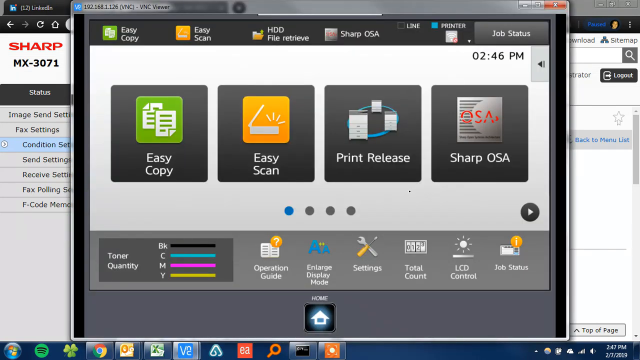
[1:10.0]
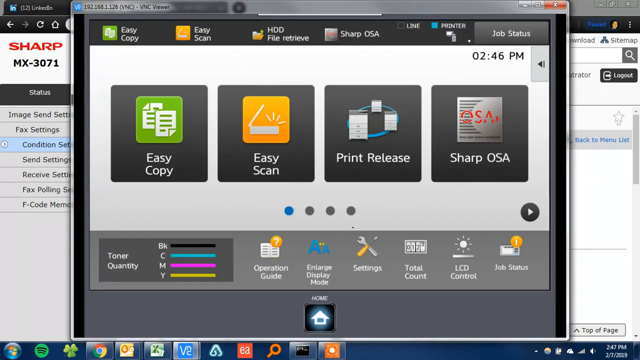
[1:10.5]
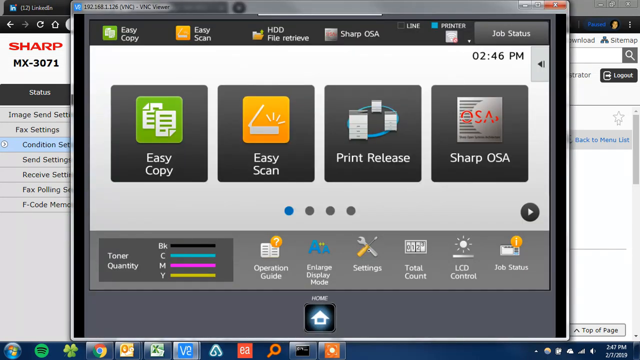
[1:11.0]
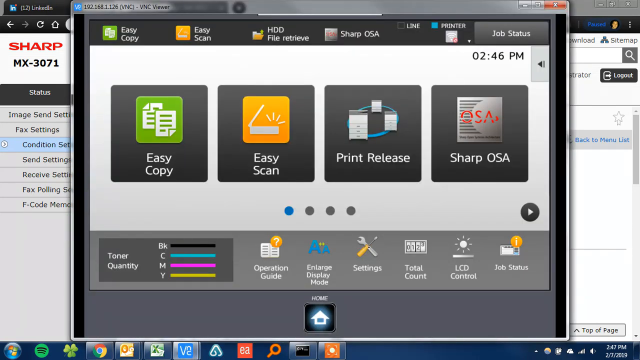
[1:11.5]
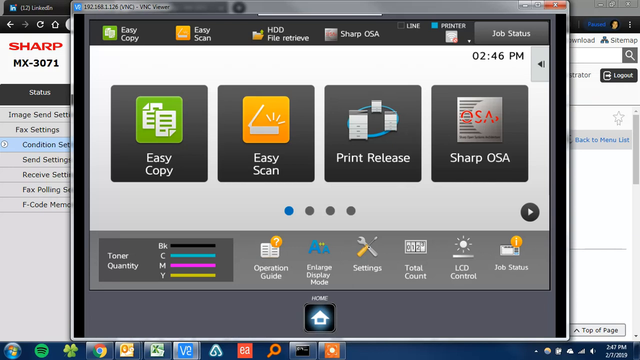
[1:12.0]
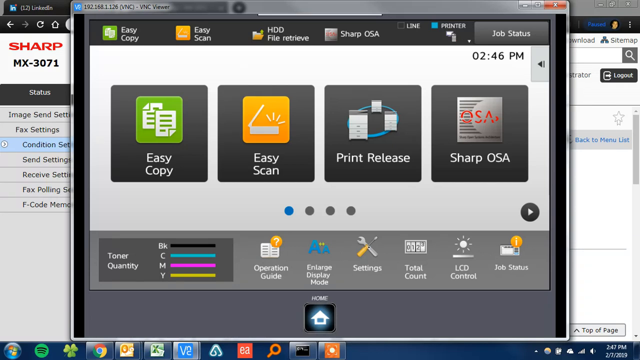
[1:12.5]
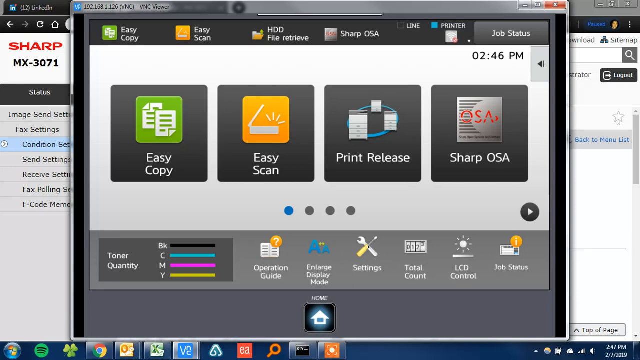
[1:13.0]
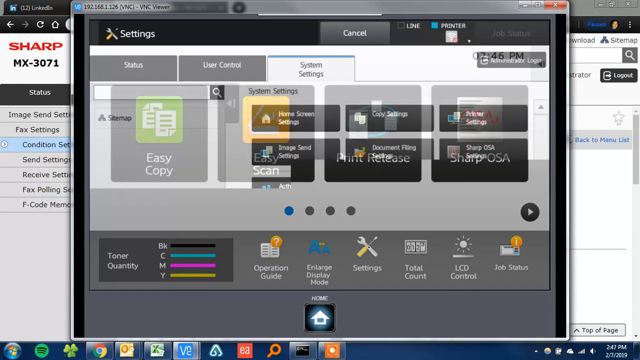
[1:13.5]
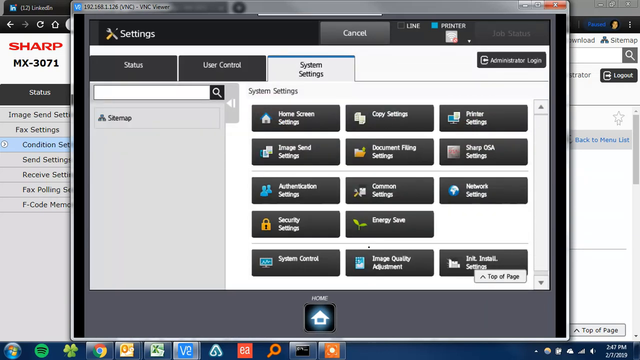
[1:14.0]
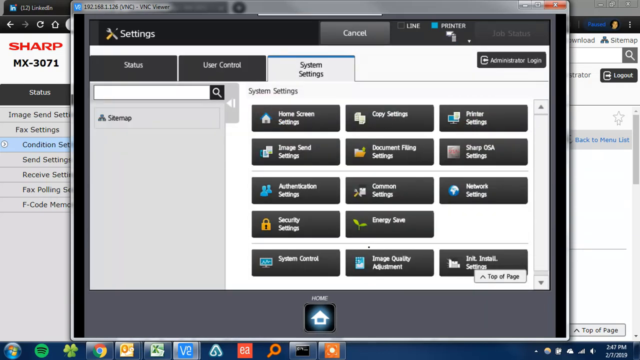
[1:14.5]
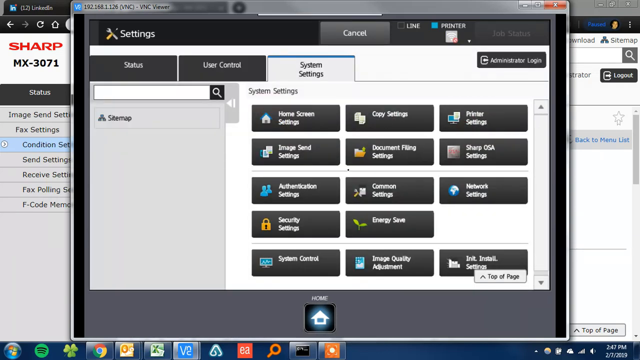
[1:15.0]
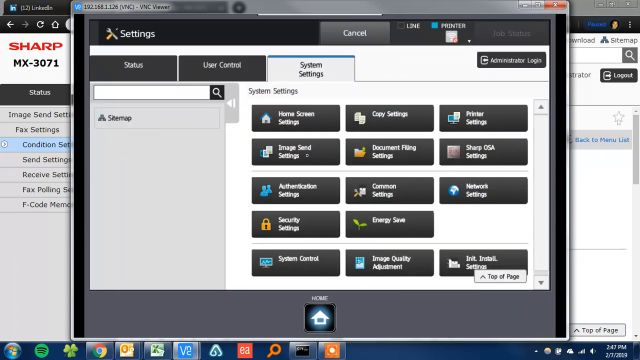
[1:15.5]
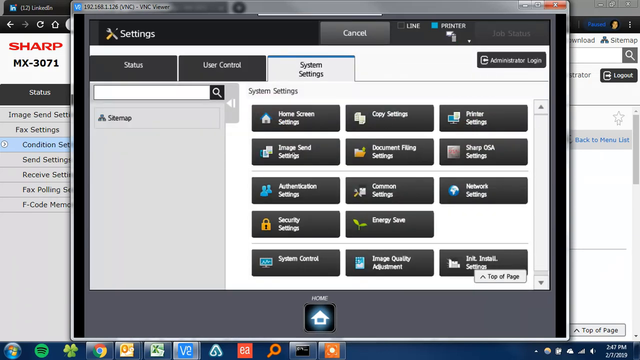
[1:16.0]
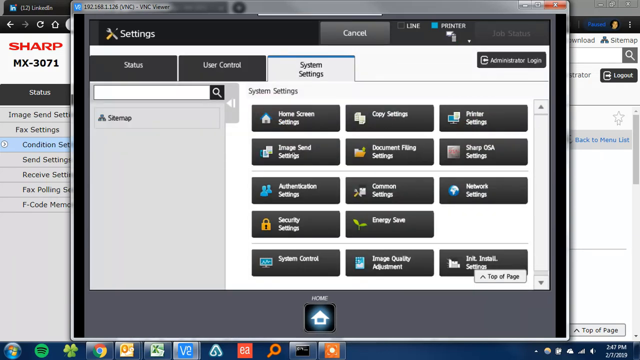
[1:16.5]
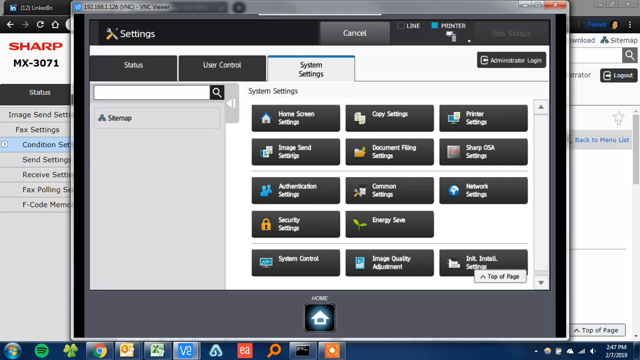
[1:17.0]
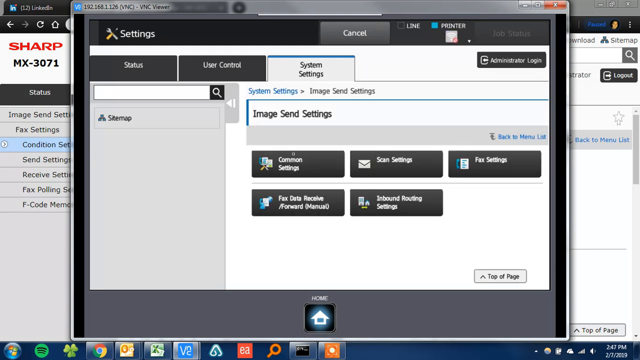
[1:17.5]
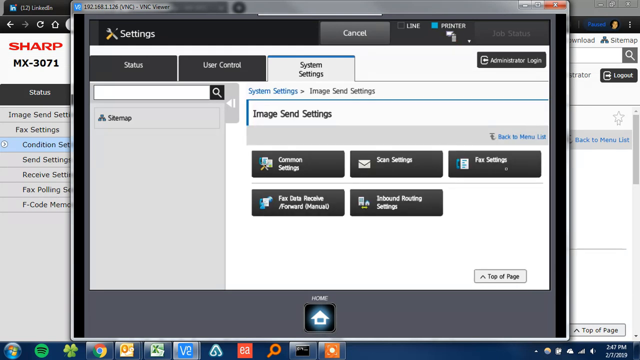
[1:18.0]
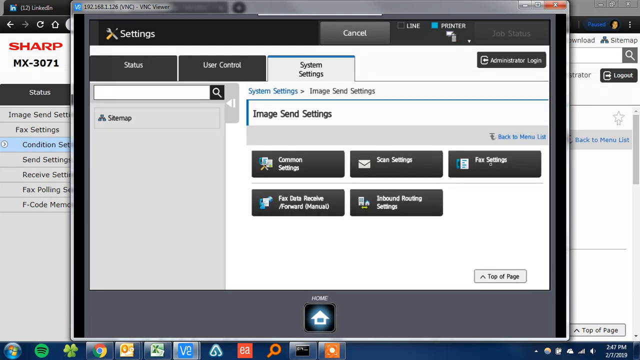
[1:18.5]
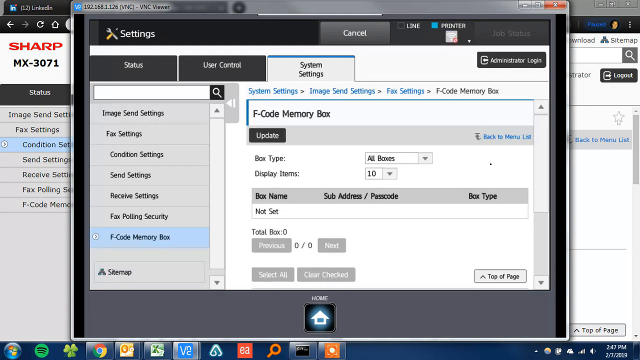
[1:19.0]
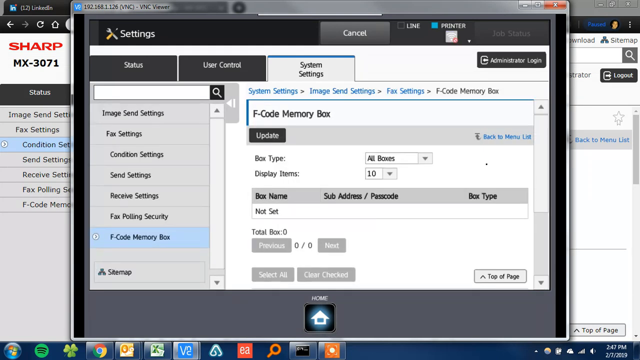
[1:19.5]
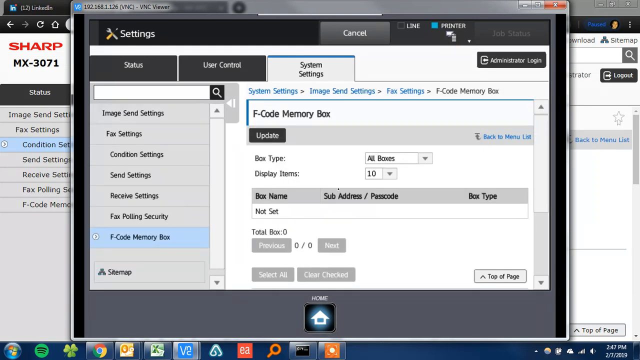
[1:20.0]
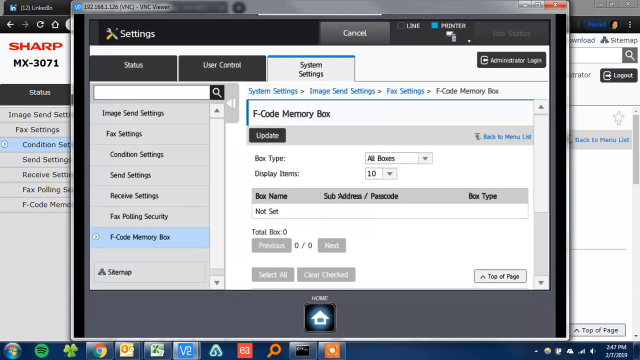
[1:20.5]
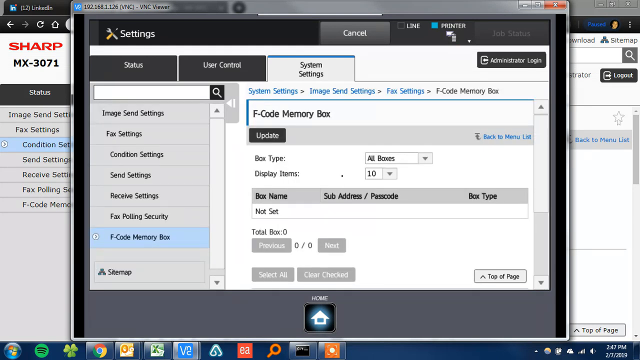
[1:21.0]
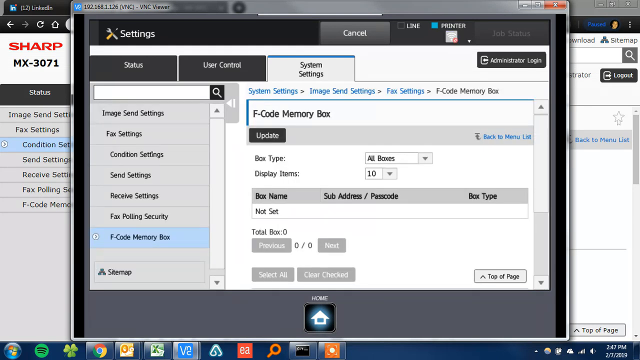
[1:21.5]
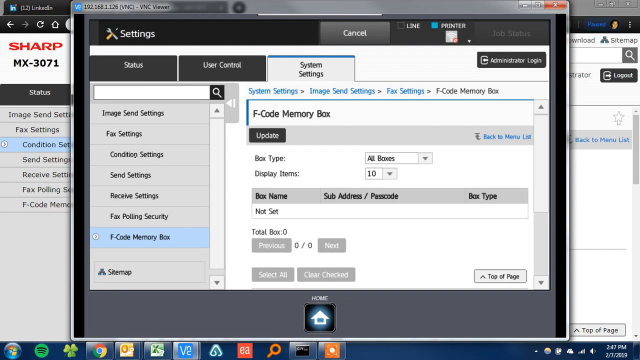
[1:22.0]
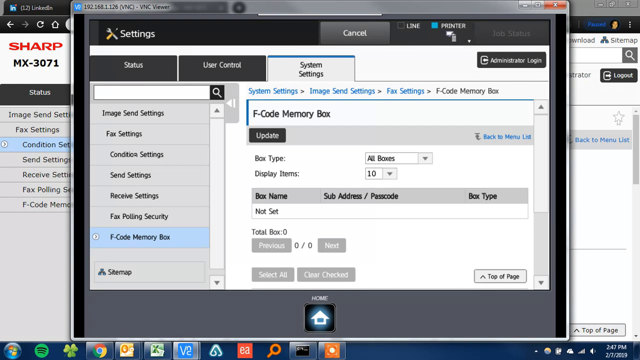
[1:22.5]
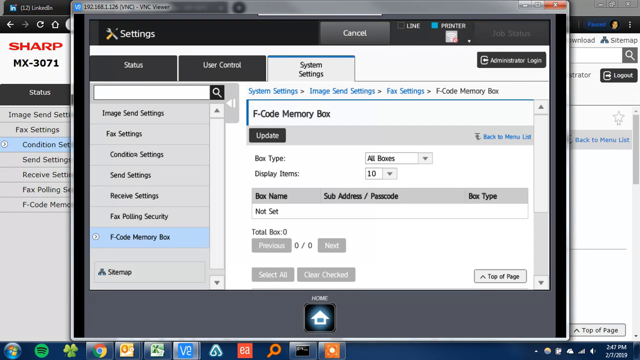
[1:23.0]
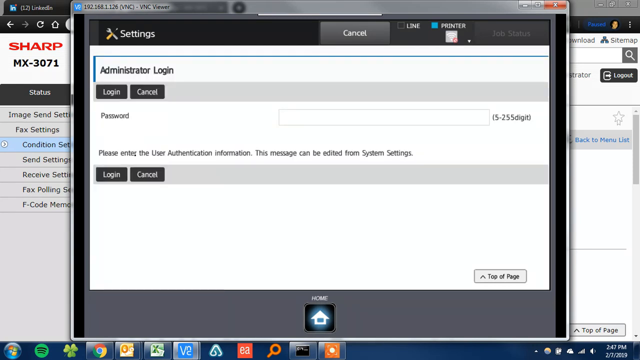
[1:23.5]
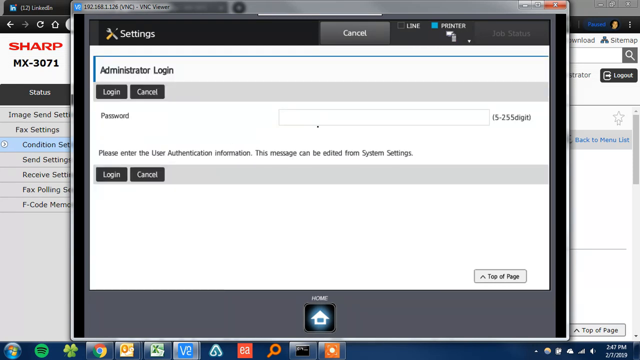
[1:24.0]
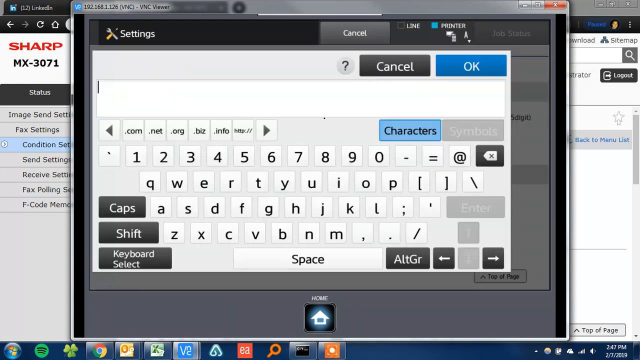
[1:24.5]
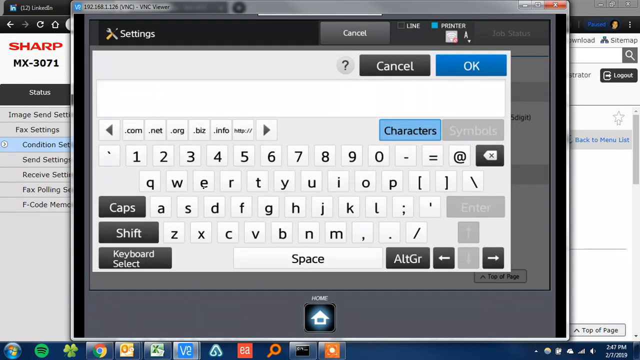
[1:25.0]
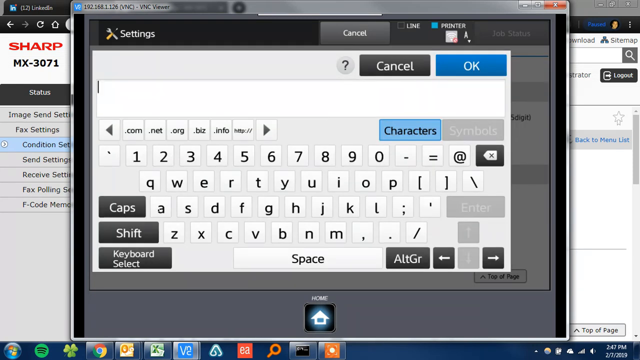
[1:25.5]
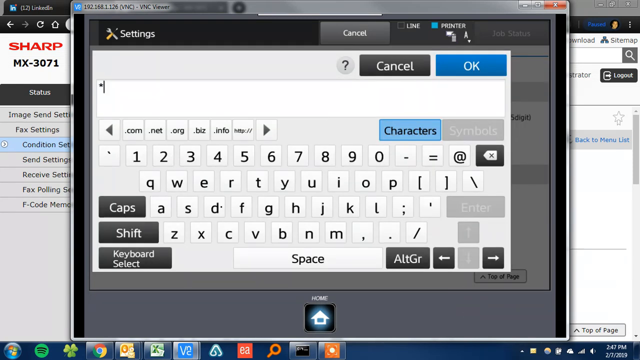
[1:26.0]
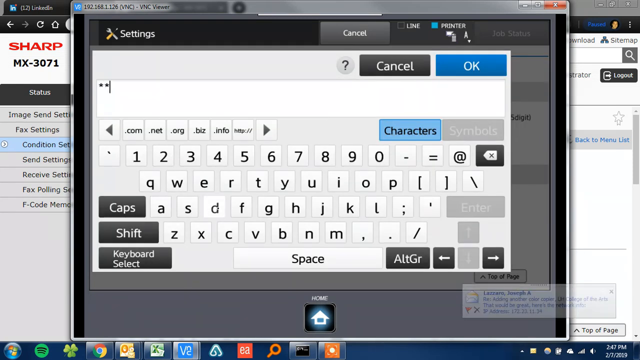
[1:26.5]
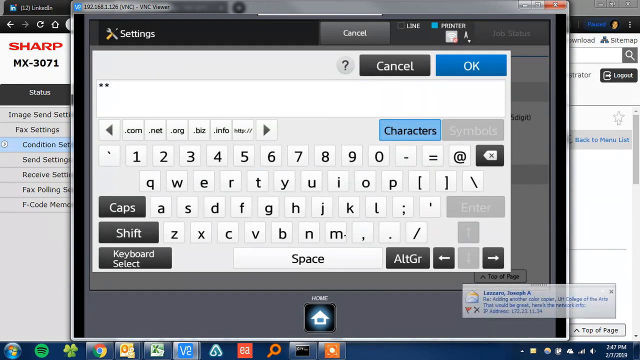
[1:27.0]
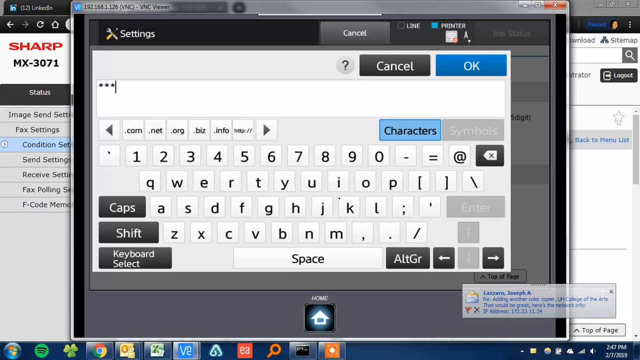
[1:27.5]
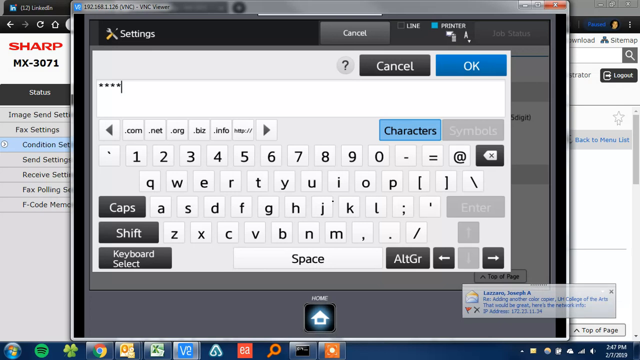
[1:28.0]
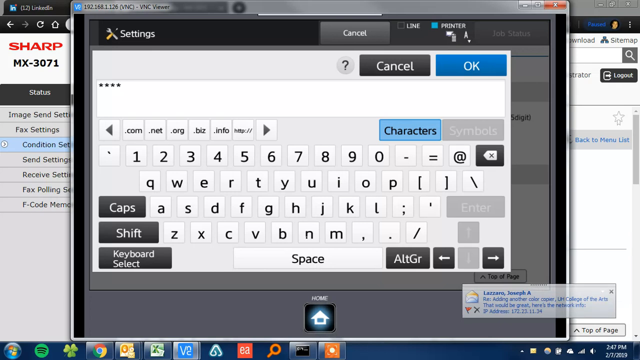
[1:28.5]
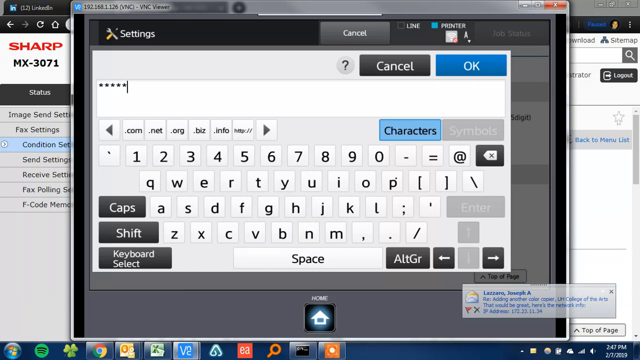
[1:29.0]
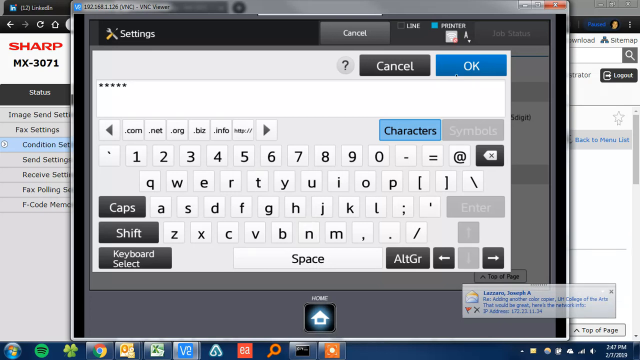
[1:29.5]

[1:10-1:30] A pop-up from the Sharp website is open, labeled "VNC viewer". Along its top are options for easy copy, easy scan, HDD file retrieve and Sharp OSA, a checkbox, and "job status". In the middle are easy copy, easy scan, print release and Sharp OSA, with four circles indicating four pages, and page one of four is shown. The user appears to hit print, and the system settings come up, listing about 10 items including home screen, image, authentication settings and security settings. They click image send settings, which lists five options, then click fax settings and go to one labeled F code memory box. The mouse moves around, and they then click one labeled administrator login. A pop-up keyboard appears, and they type in a password that shows as stars, then enter it and get in.